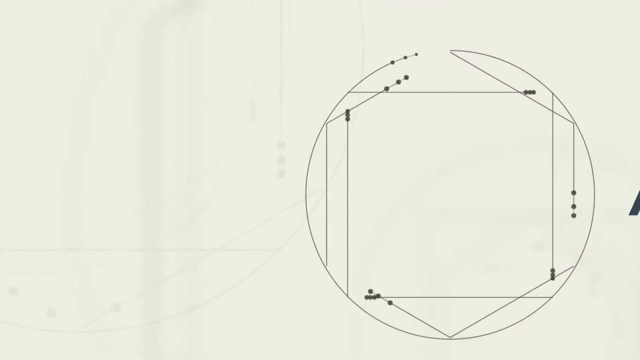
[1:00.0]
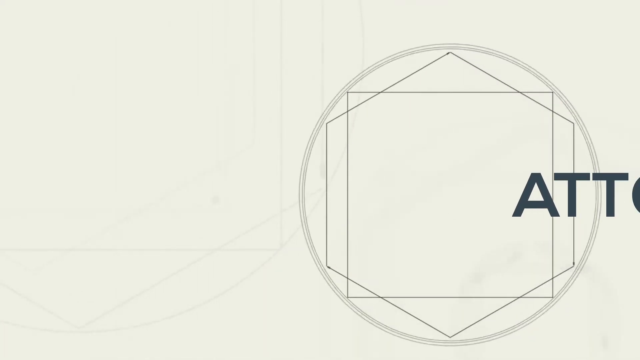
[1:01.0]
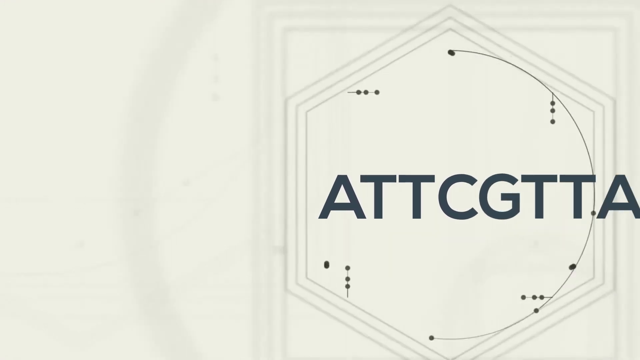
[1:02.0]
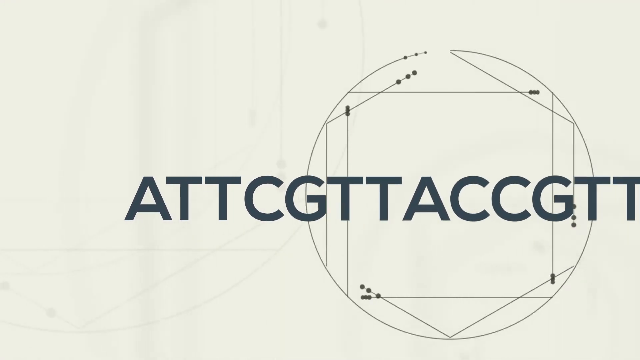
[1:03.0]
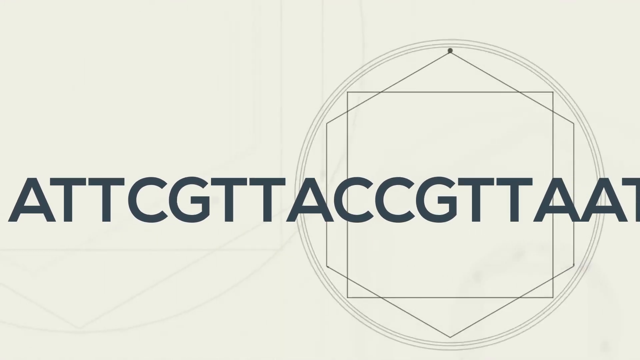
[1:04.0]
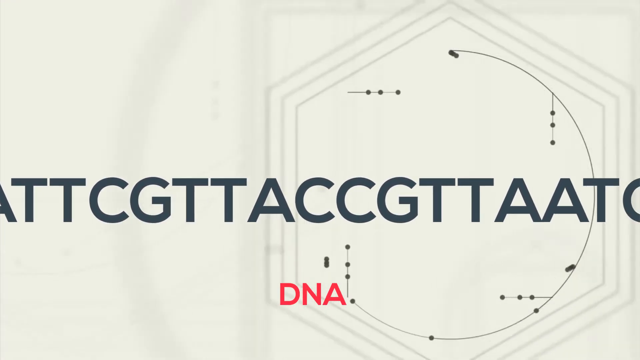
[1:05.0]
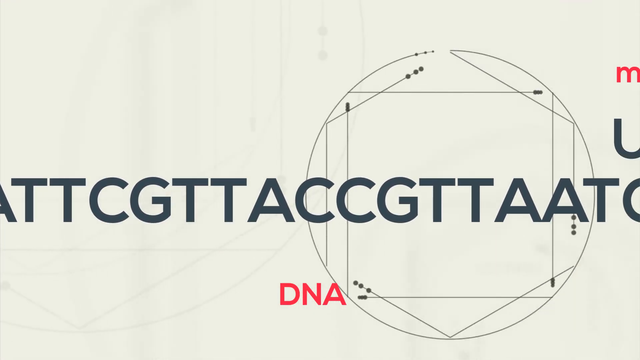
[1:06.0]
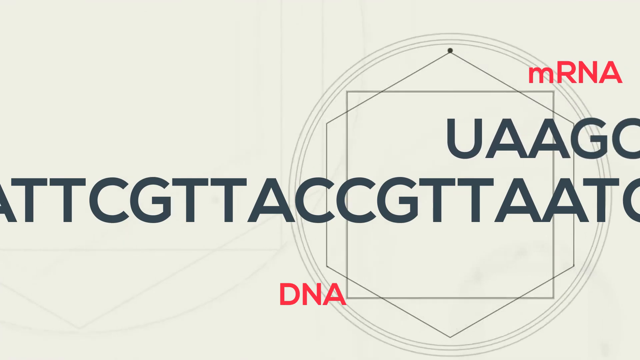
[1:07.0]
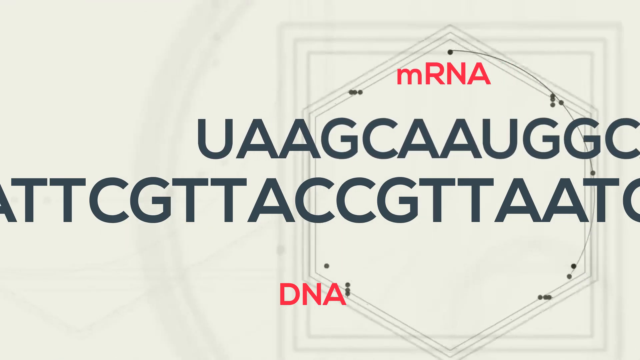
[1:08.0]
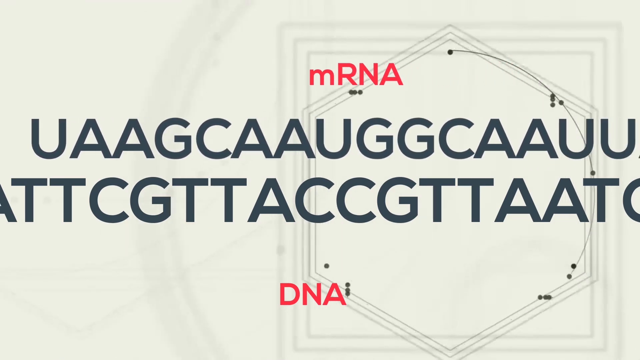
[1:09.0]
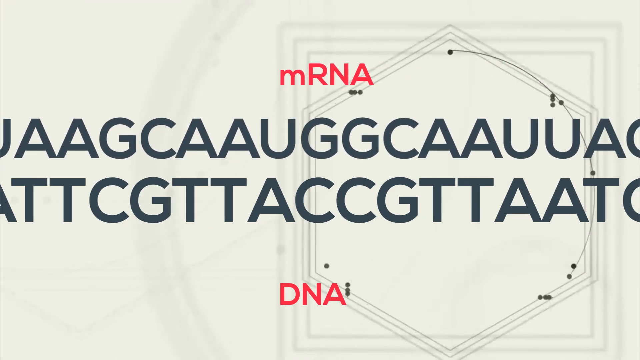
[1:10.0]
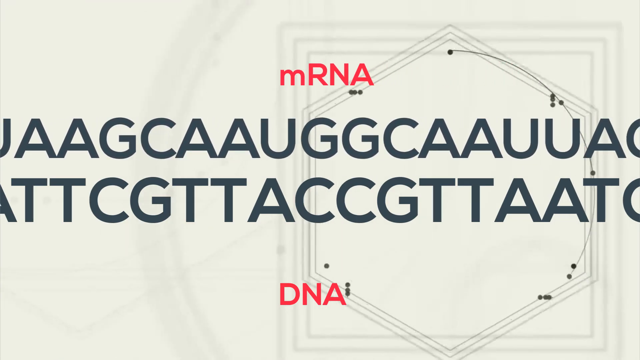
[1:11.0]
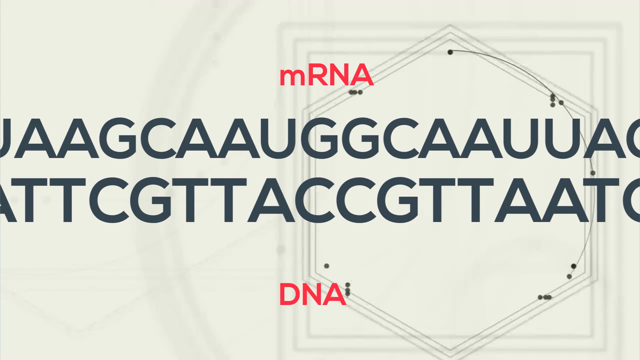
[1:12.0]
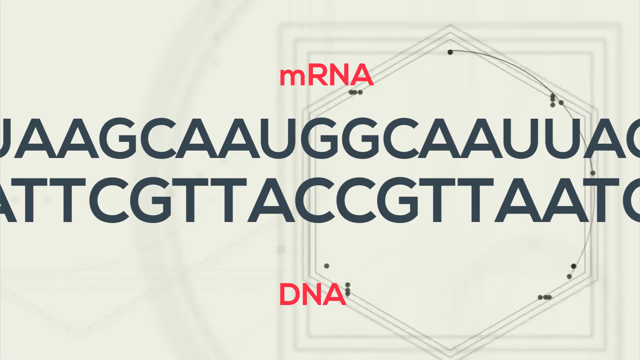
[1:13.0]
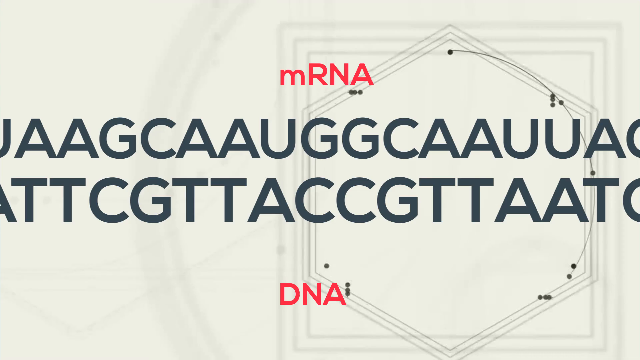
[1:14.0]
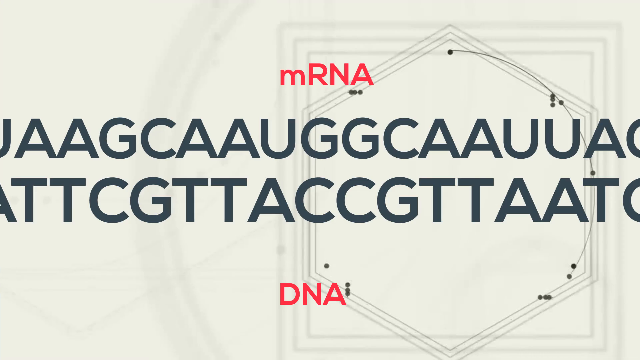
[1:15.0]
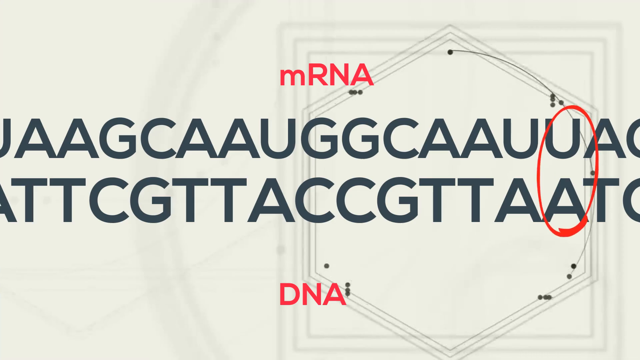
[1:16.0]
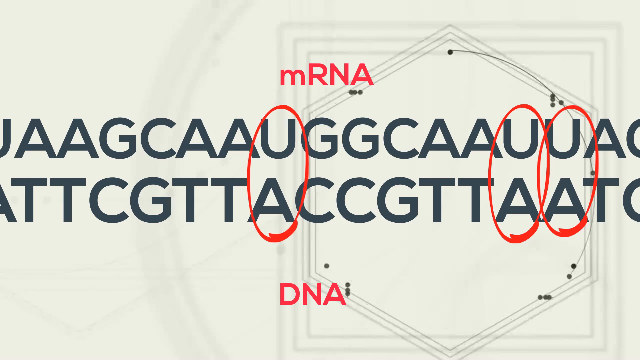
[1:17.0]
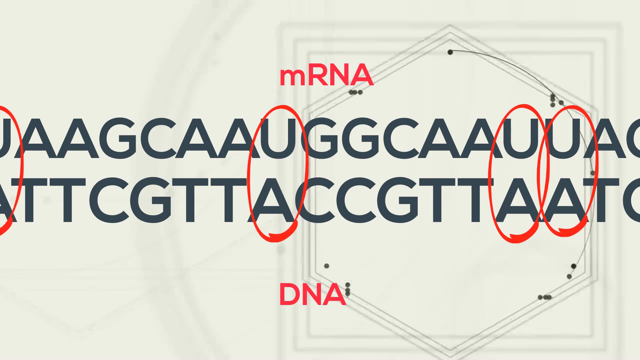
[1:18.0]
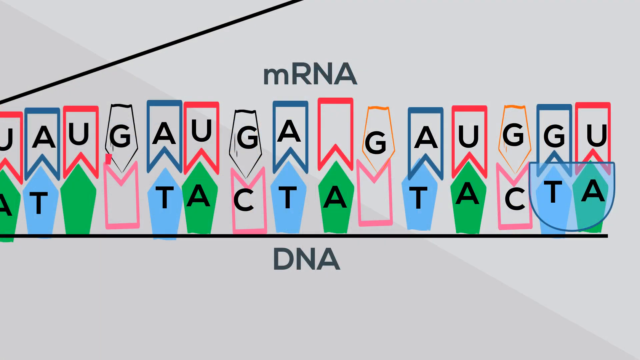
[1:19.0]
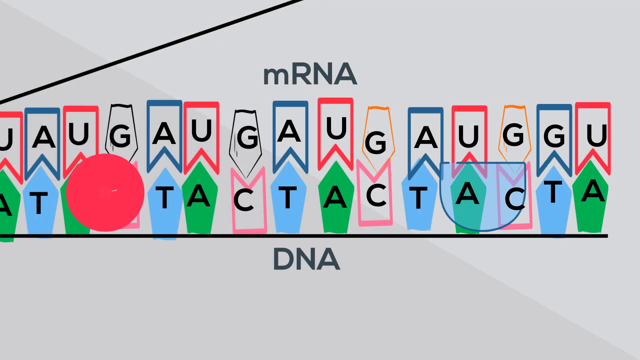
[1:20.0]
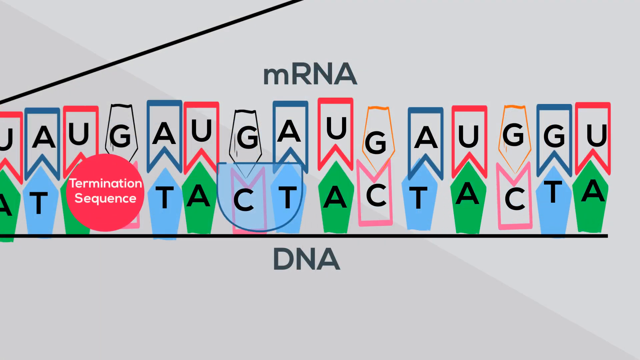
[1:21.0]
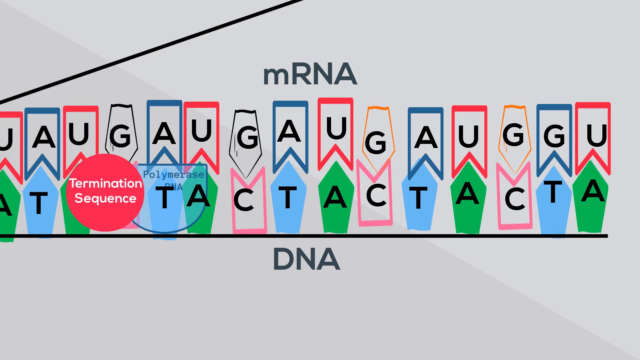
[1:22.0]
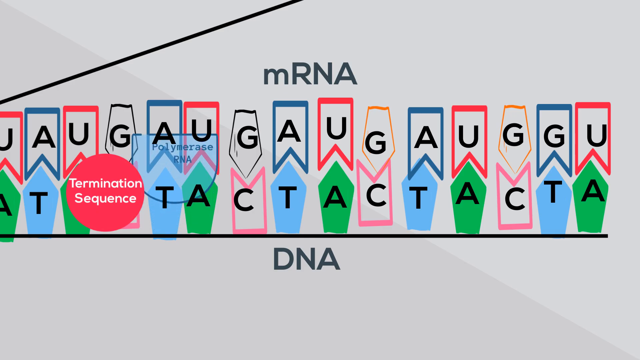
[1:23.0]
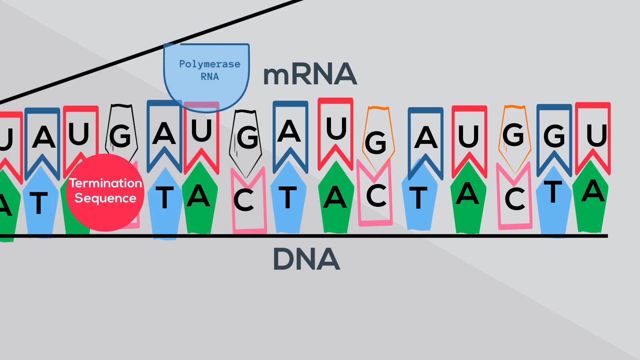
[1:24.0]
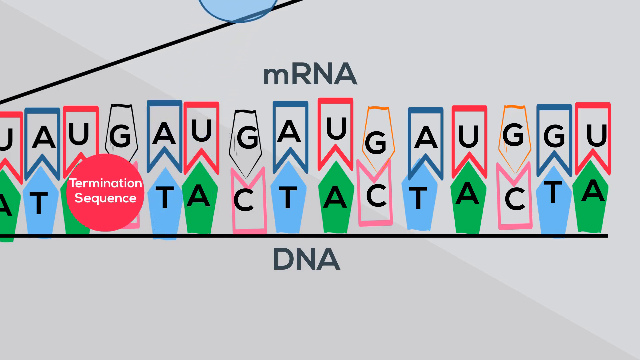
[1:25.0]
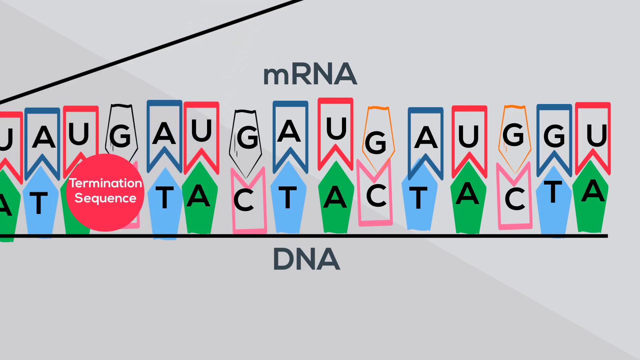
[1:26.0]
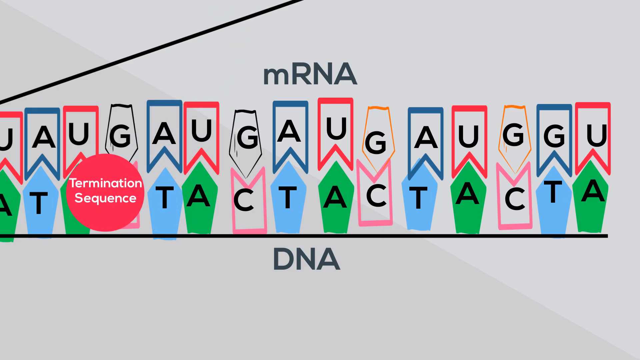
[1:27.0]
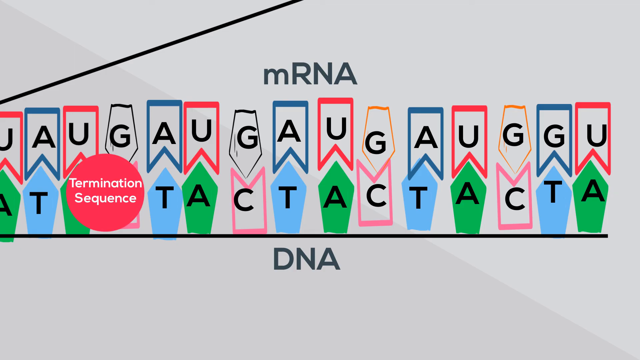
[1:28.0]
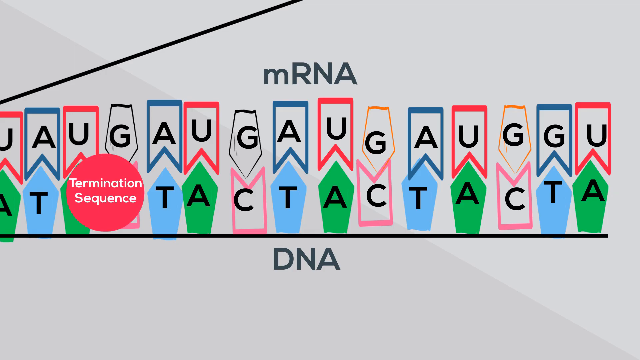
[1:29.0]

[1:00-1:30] A DNA sequence appears, reading "ATTGCGTTACCGTTAAT", and behind it is an interactive sphere with dots and lines appearing inside it, forming a square and a hexagon. The word "DNA" in pink appears at the bottom of the screen. Another strand appears above the original one, reading "UAAGCAAUGGCAAUUA"; this is the mRNA strand, a linear representation of base pairs, and some sections are circled in red. Wherever there is a U on the mRNA sequence, its base pair on the DNA sequence is an A. The termination sequence is then shown: the polymerase RNA runs through the lower half of the strand, hits the termination sequence, and leaves the animation. This time the shapes have letters on them, representing the base pairs that have already been copied.